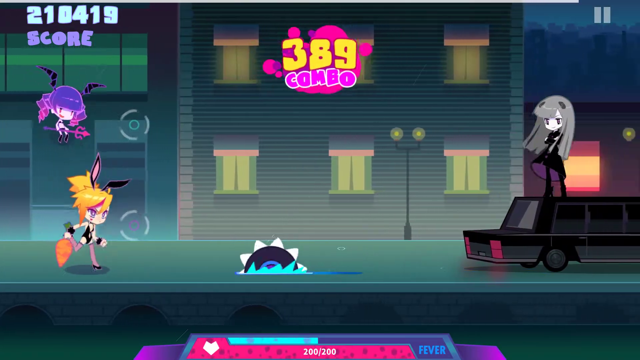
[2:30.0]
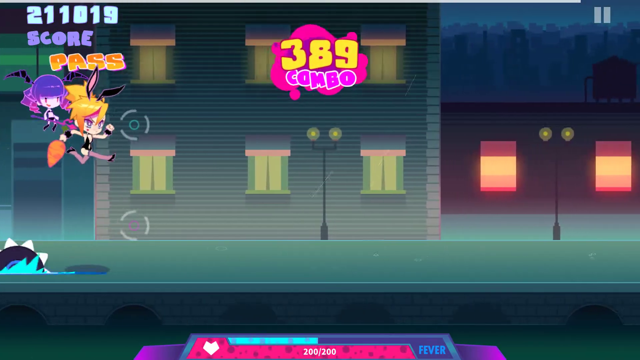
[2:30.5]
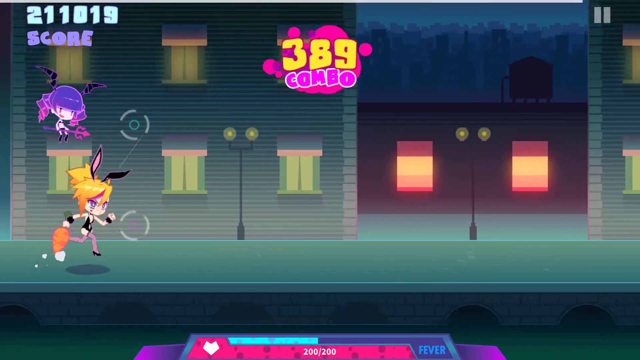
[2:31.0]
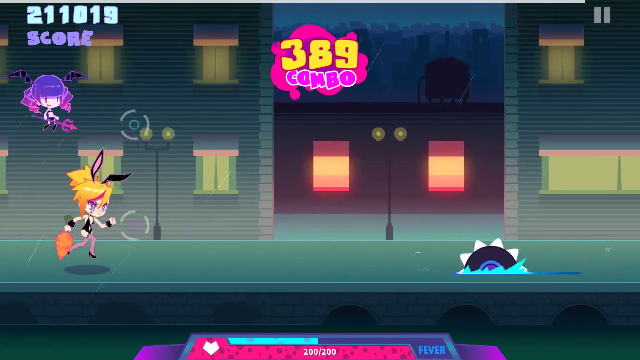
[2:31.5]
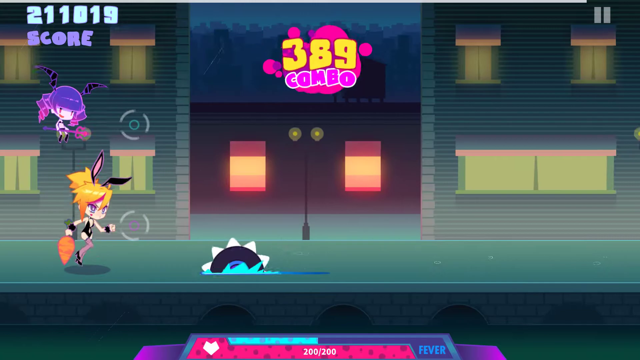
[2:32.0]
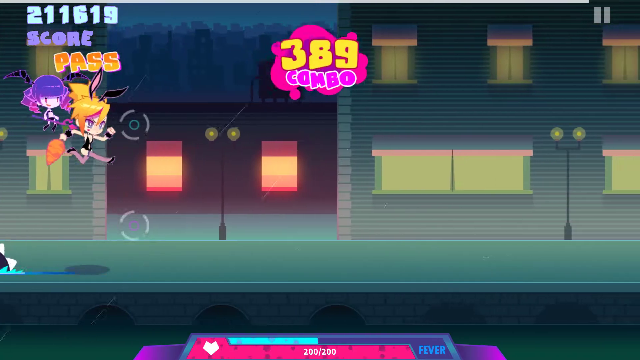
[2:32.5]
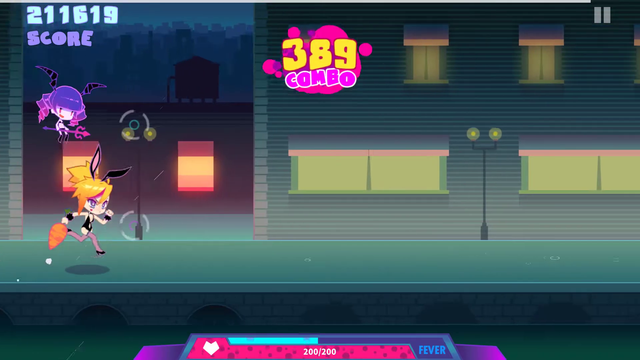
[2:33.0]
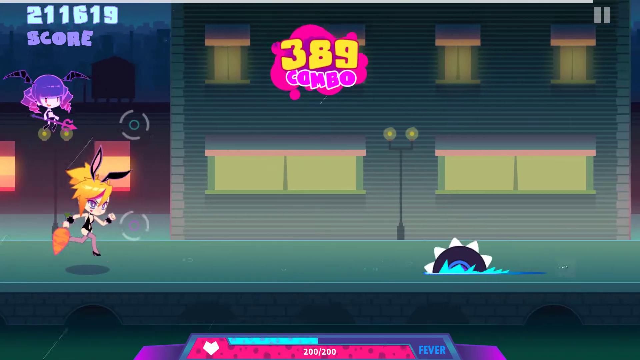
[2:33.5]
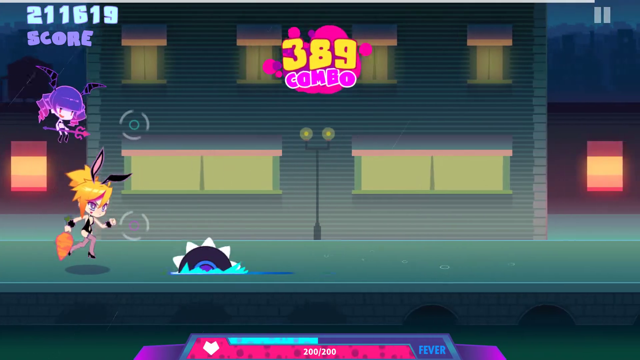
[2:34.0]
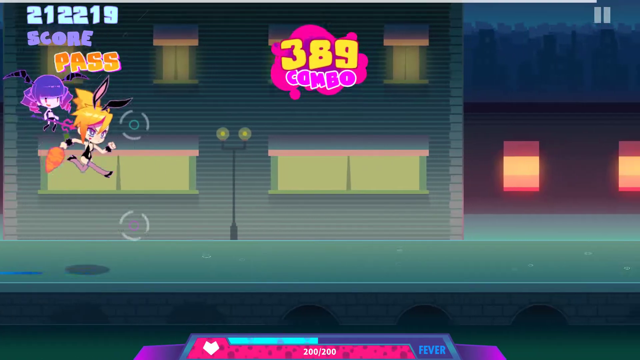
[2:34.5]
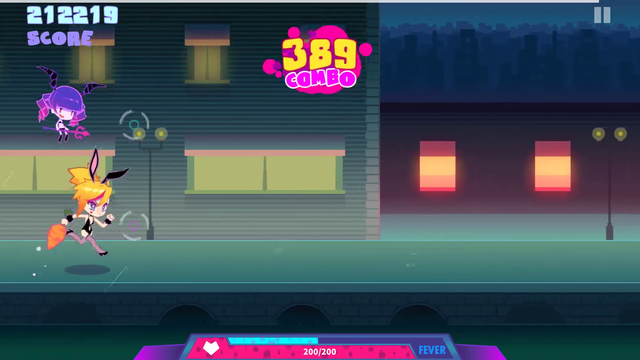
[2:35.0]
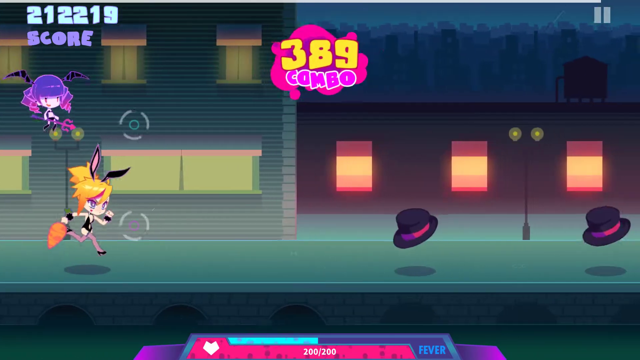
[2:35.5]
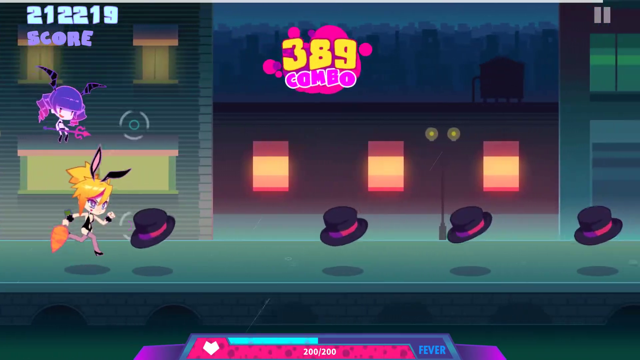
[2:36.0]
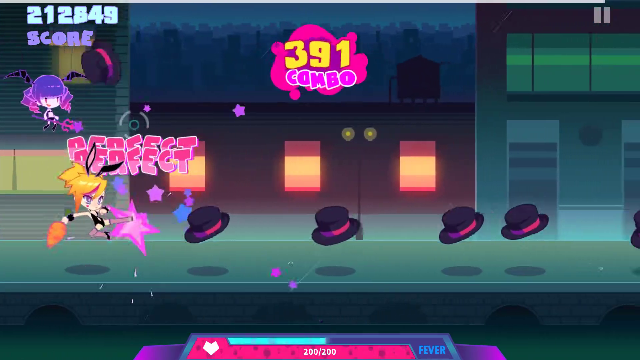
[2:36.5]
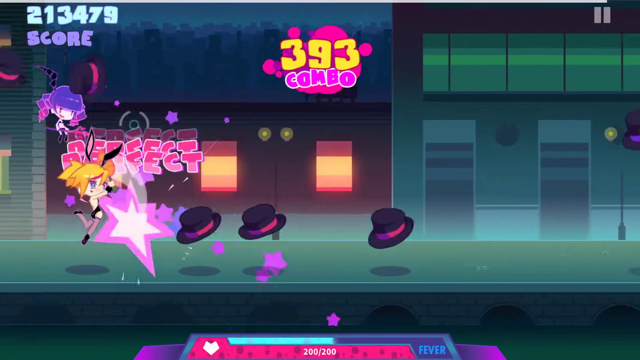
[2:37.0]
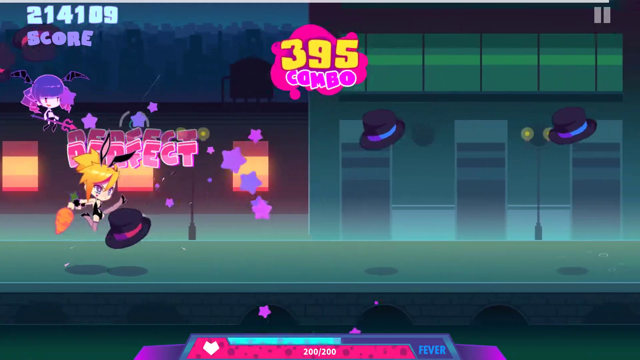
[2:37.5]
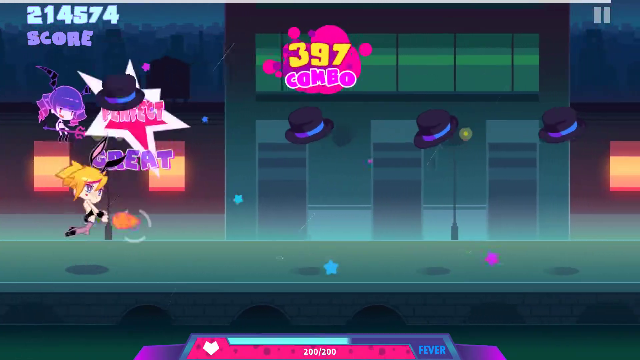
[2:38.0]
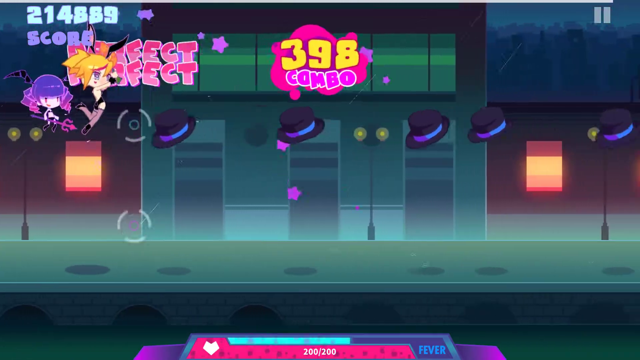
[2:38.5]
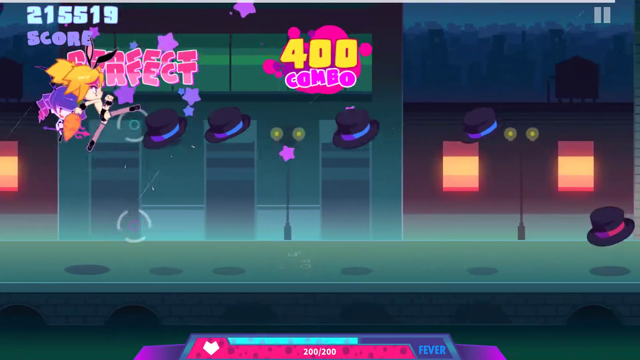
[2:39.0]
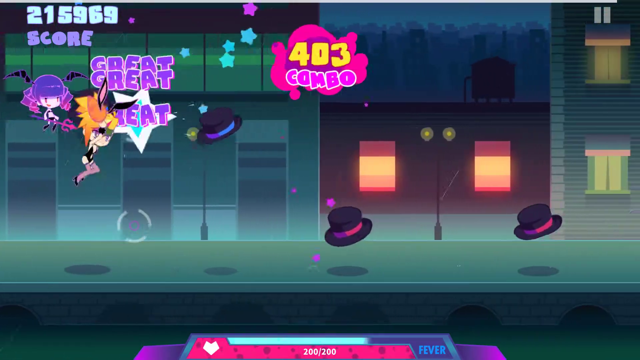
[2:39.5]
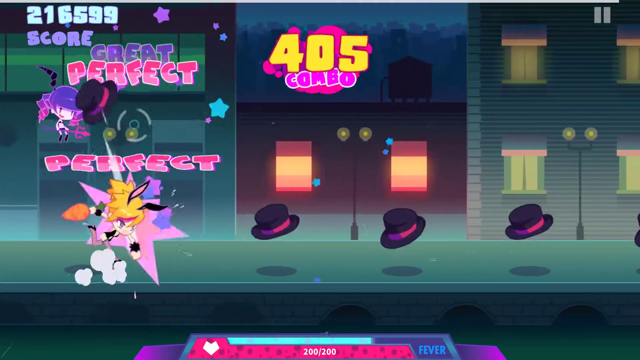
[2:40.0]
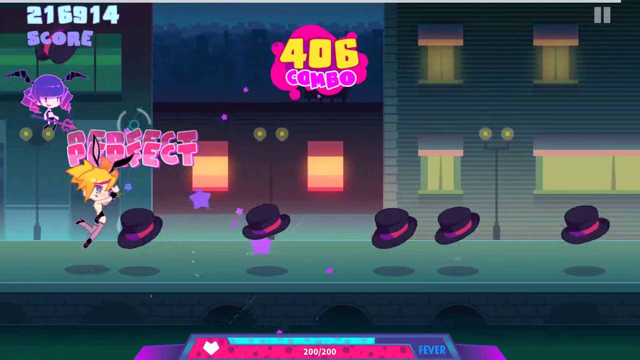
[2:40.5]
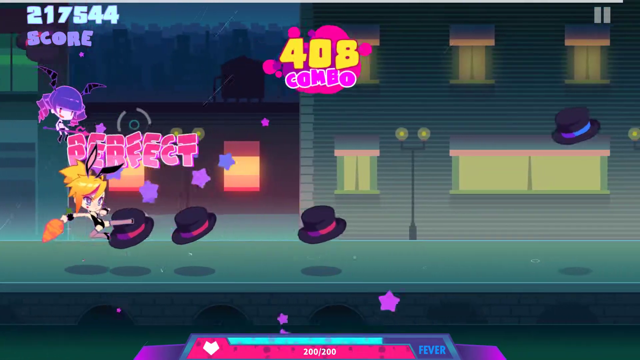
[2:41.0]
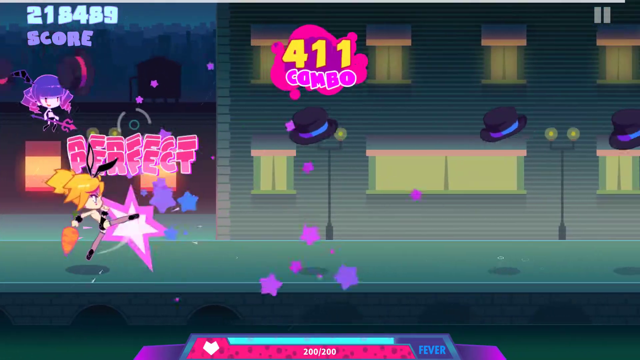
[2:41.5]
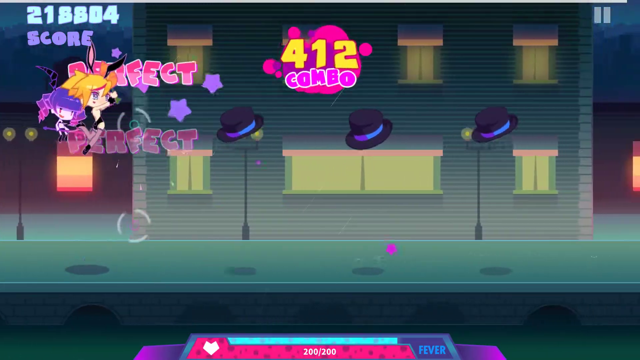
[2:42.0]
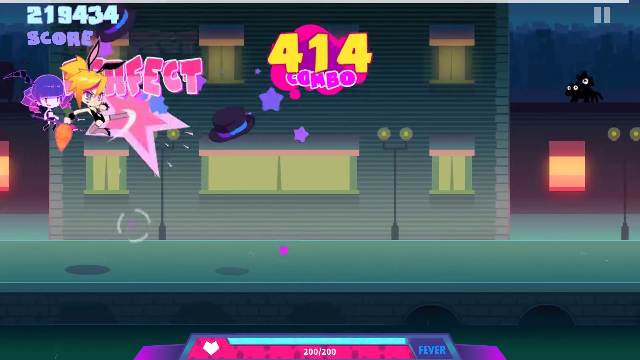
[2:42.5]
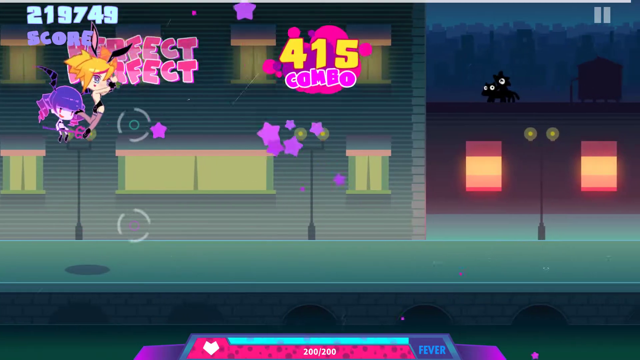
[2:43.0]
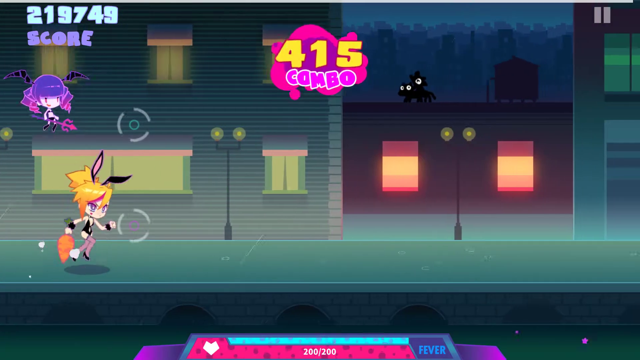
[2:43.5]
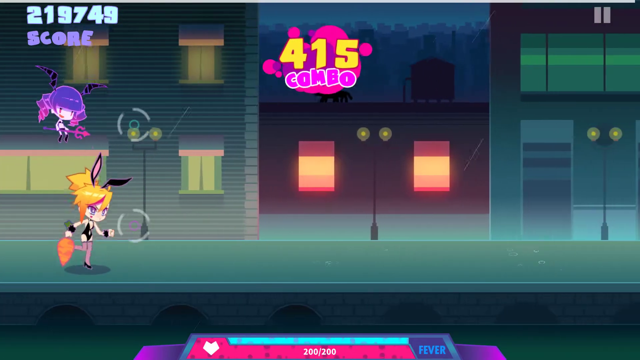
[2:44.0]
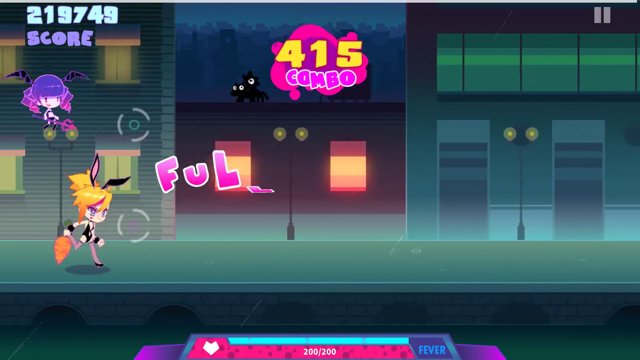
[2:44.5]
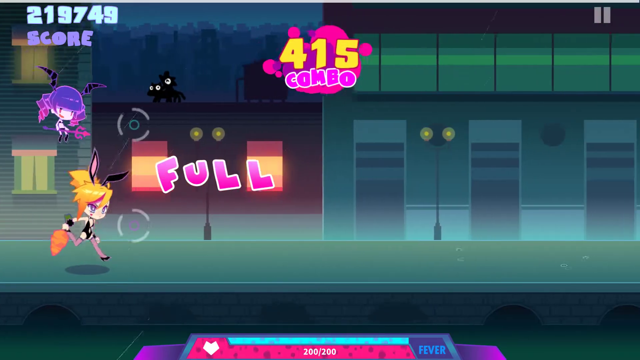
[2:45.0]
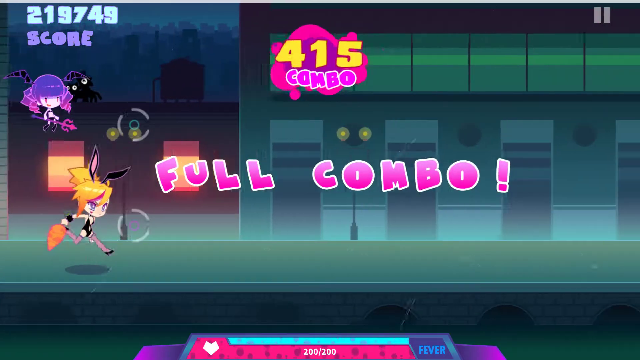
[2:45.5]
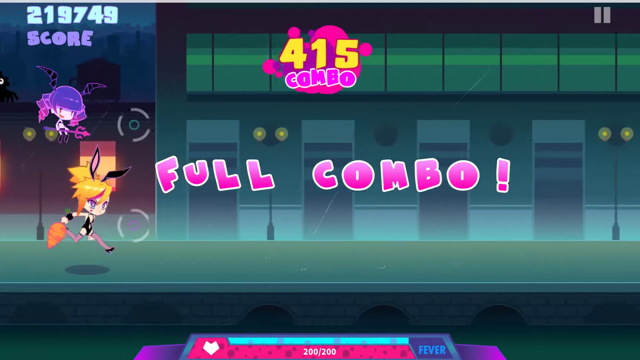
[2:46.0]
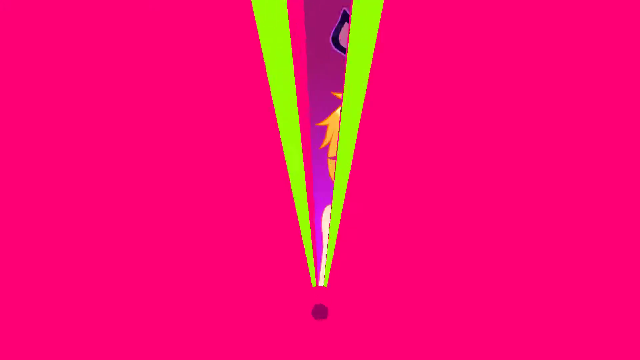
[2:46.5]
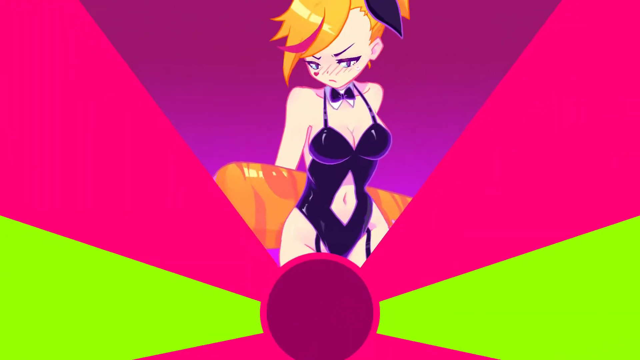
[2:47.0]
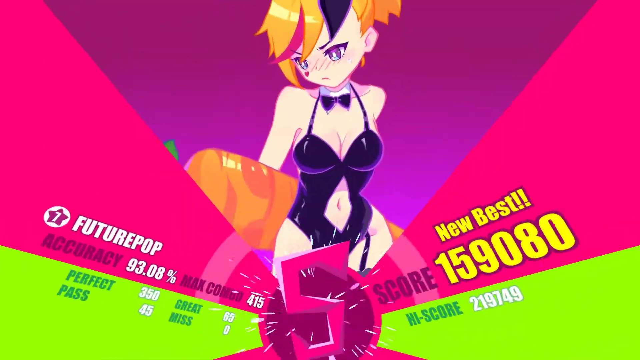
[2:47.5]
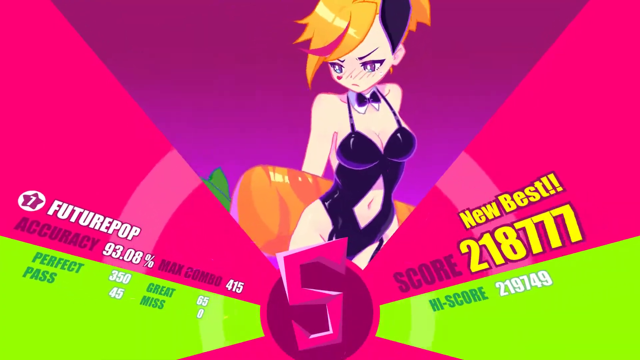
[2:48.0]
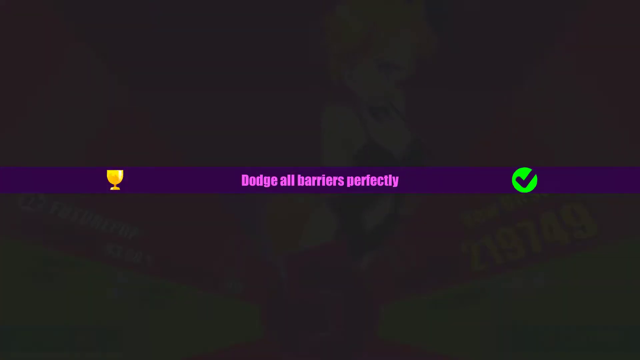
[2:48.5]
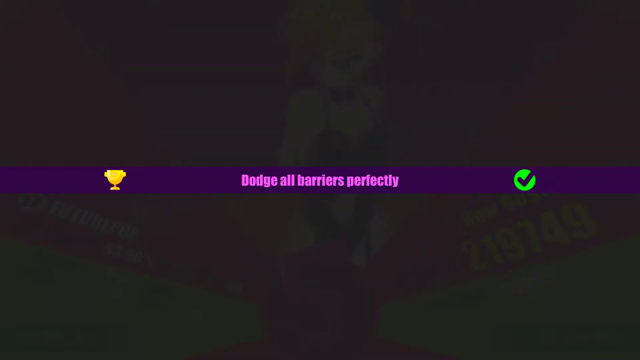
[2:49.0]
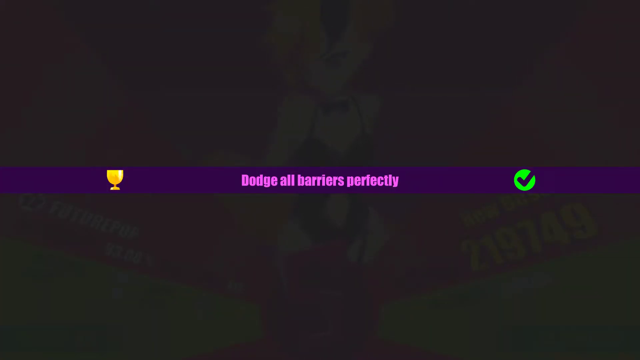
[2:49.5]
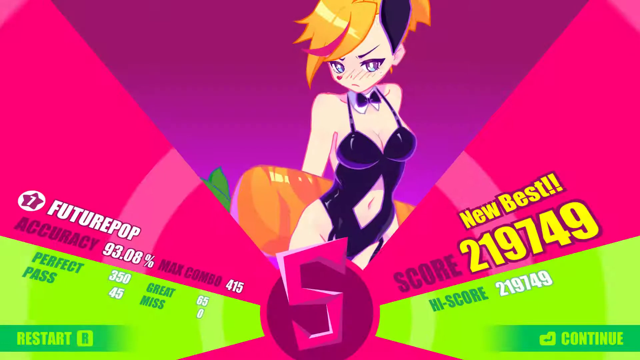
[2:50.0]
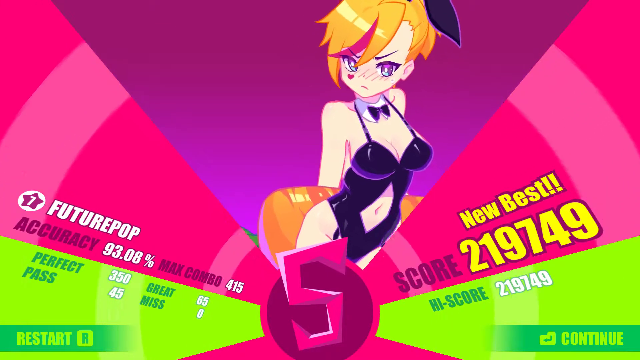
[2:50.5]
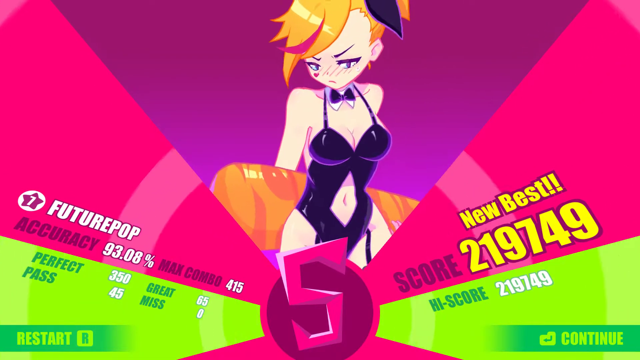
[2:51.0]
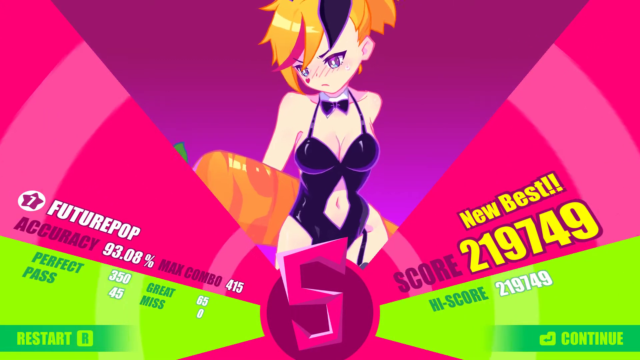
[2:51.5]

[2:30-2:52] The video game follows a small anime girl wearing black bunny ears, a black outfit, long stockings and black high heels. A small anime character with a purple hat floats above her. She runs on a sidewalk beside a street, along the edge of which three different buildings keep repeating: an off-green building with three upstairs and three downstairs windows, a small black and orange building with two orange windows, and a building with four second-story windows side by side and two large windows beneath them. As she runs, objects fly at her, such as top hats with purple stripes and blue stripes around the rim. Every time she catches one, the word "perfect" appears above her in pink. Finally she finishes, and at the end of the game the words "full combo" appear in pink.